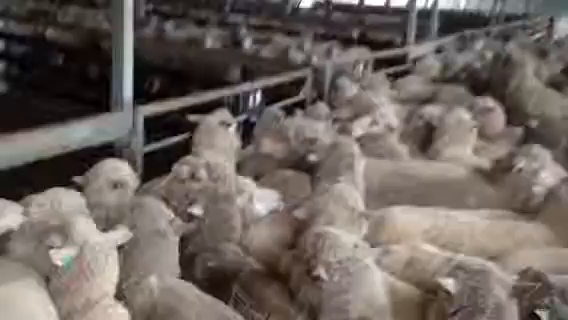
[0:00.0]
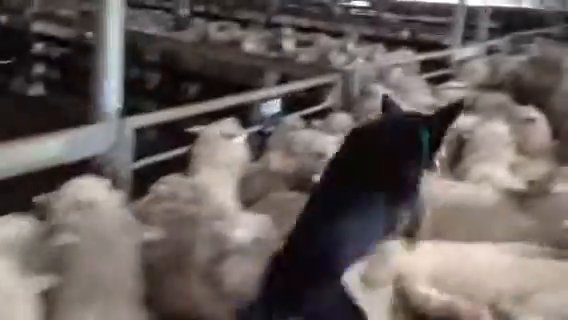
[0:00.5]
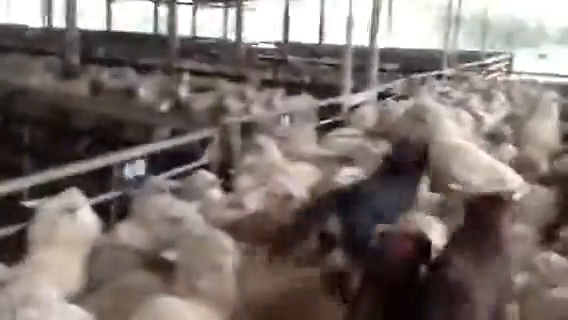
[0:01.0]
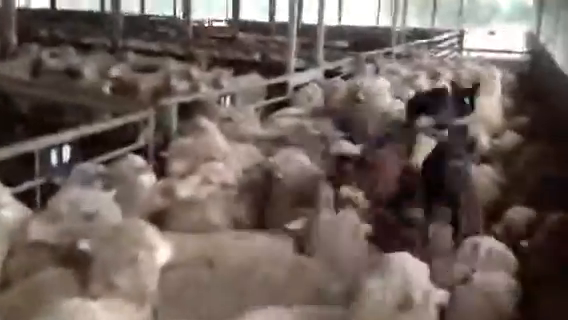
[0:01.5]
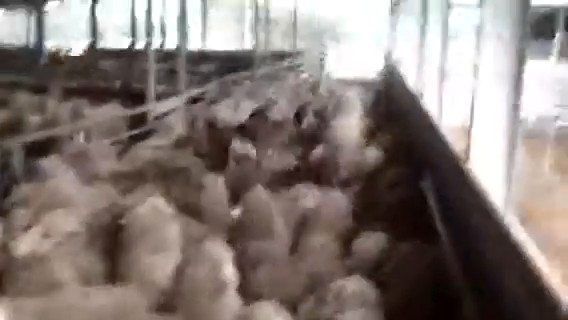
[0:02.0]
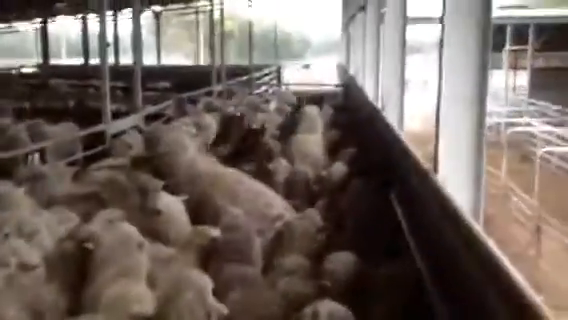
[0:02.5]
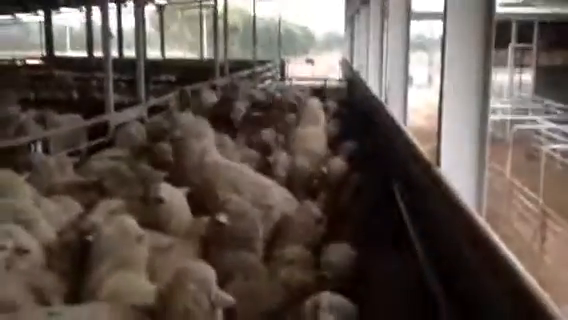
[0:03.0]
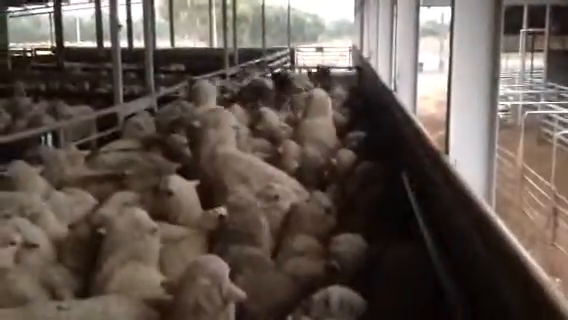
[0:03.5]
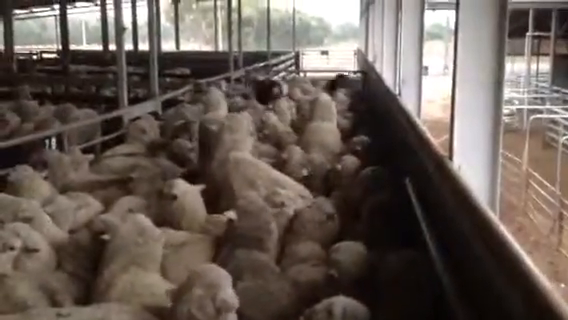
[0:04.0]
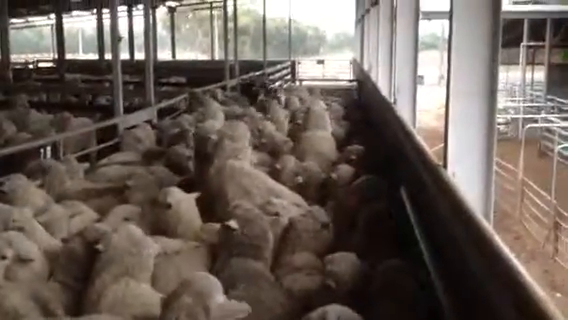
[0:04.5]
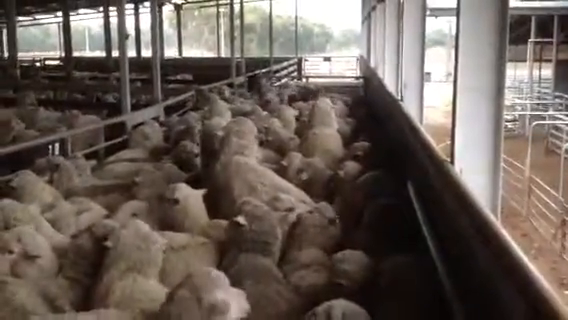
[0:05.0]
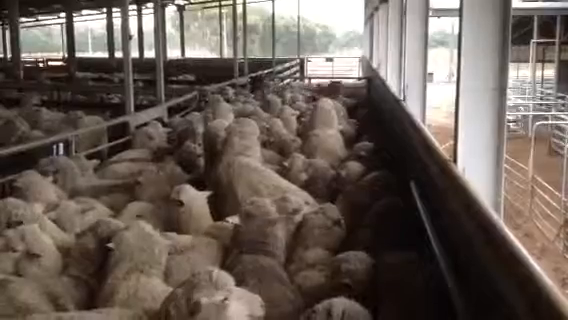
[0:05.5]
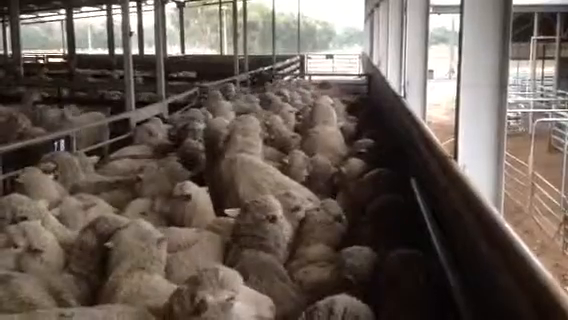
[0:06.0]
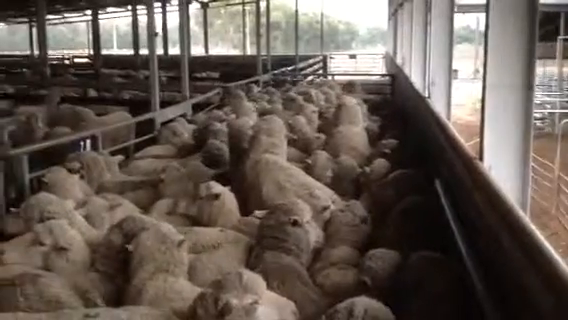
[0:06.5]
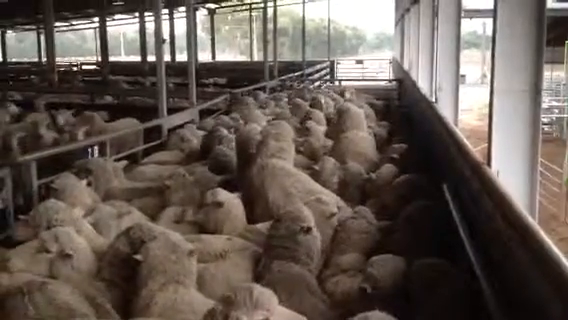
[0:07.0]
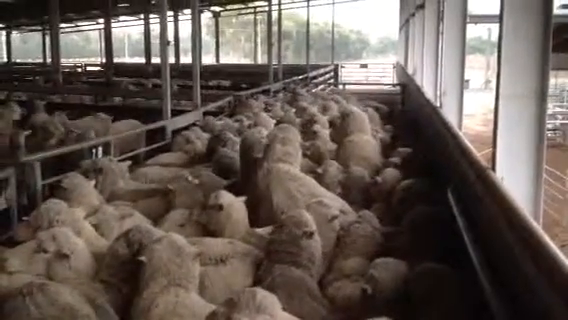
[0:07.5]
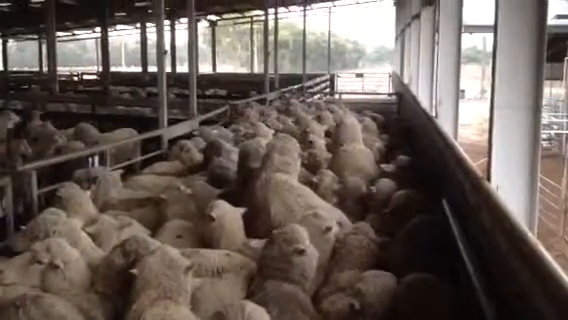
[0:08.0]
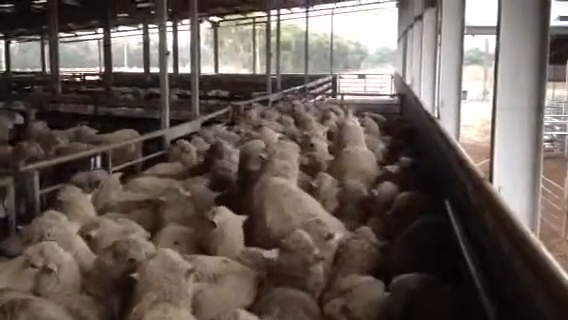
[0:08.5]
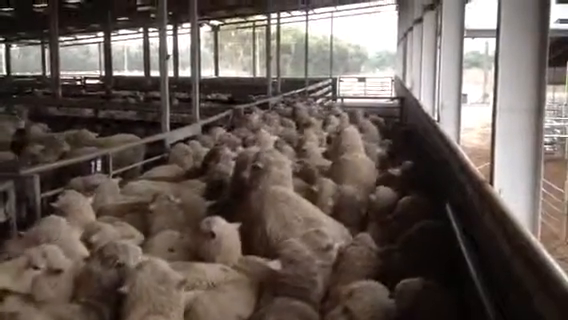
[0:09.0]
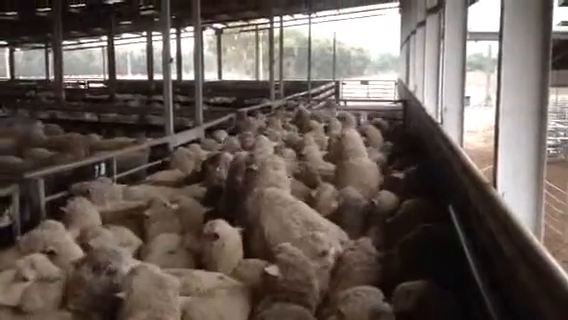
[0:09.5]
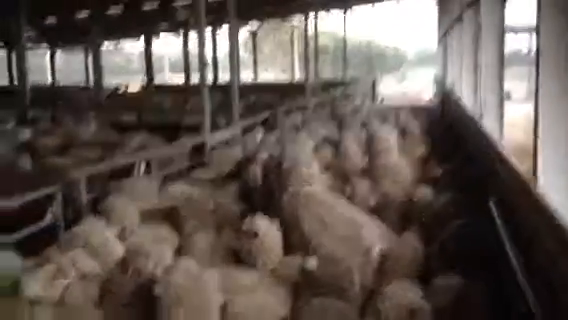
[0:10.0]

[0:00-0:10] What looks to be white sheep are enclosed in a pasture, packed very close together, with some blocked off by metal gates. Three dogs jump on top of the sheep; they are most likely farm dogs, either playing or guiding the sheep. The dogs look to be collies, though the video is a bit blurry, making it hard to tell. Outside the enclosure the outdoors is visible: there appears to be a driveway and some trees, and it may be slightly raining.